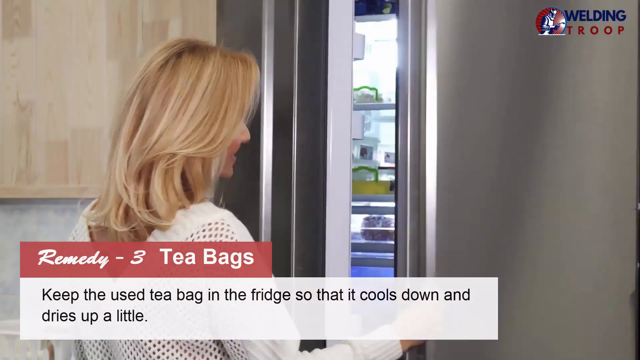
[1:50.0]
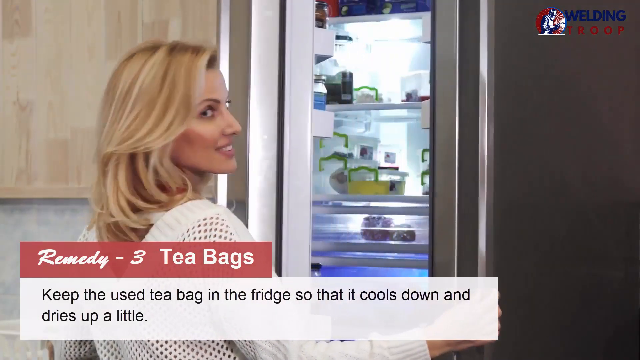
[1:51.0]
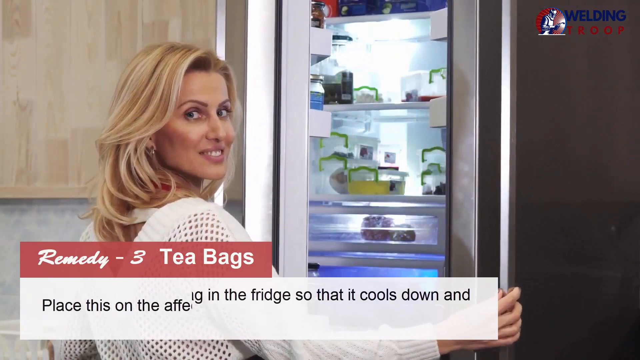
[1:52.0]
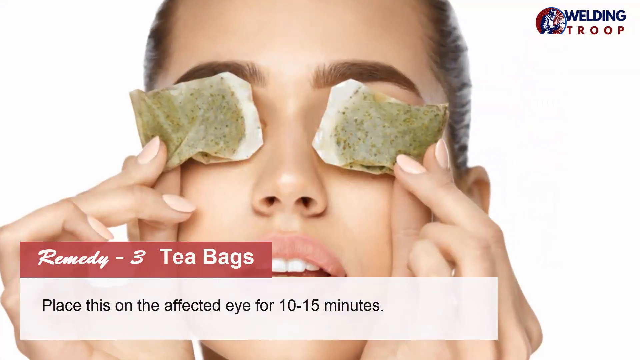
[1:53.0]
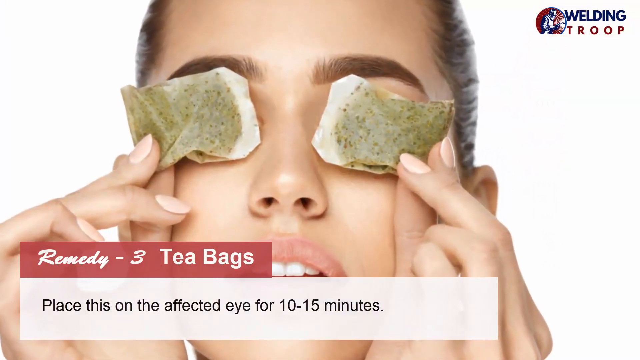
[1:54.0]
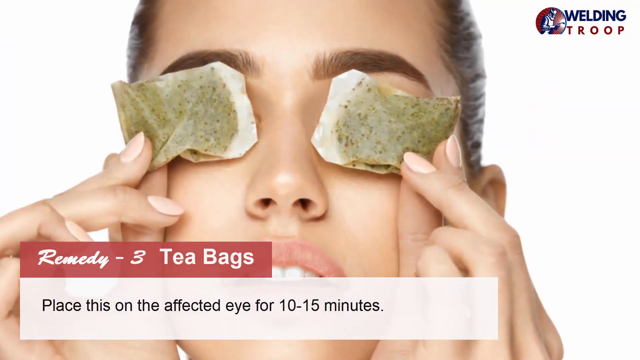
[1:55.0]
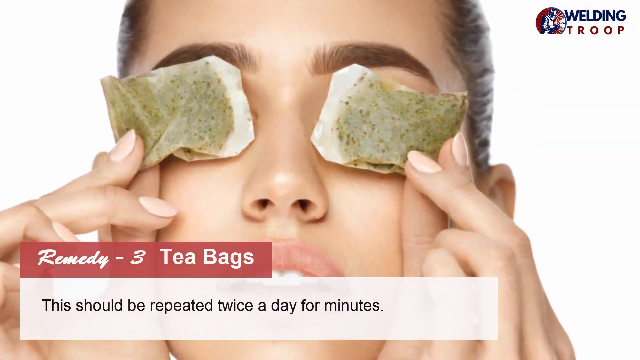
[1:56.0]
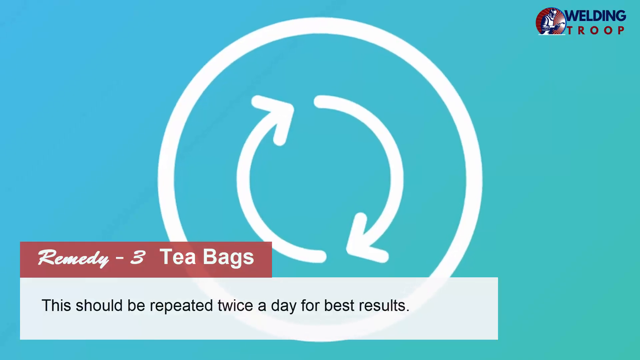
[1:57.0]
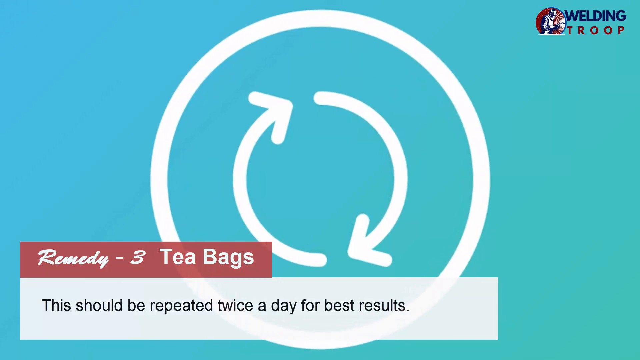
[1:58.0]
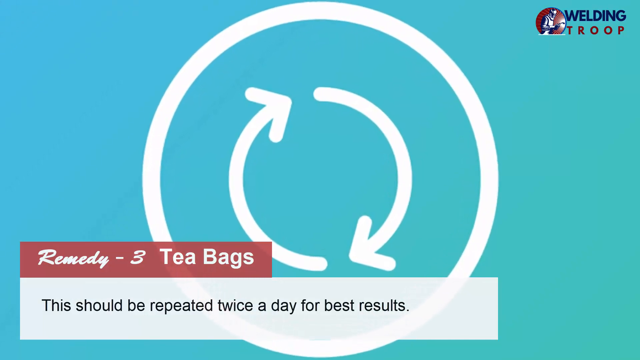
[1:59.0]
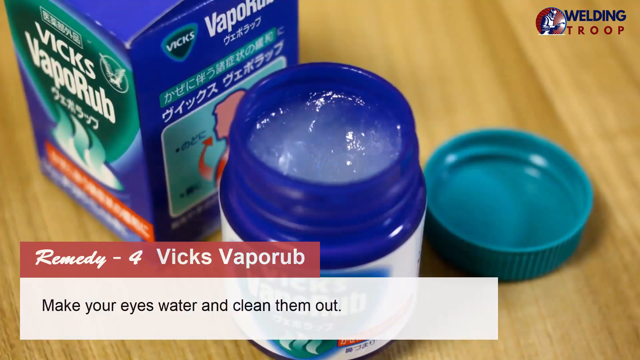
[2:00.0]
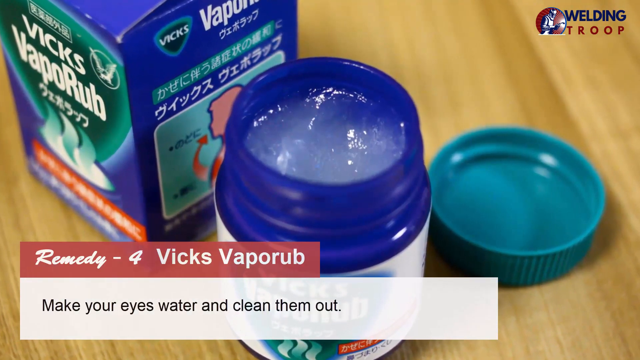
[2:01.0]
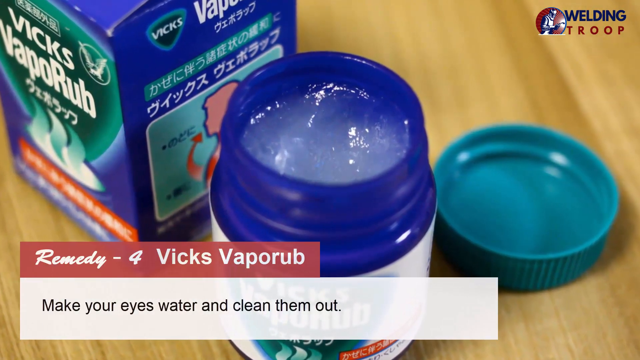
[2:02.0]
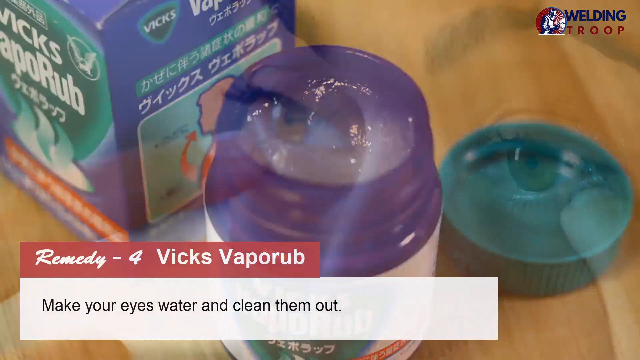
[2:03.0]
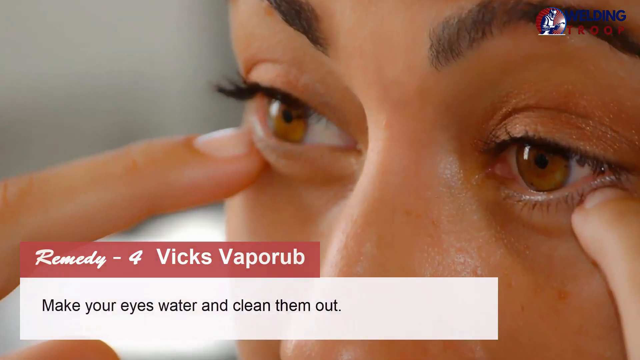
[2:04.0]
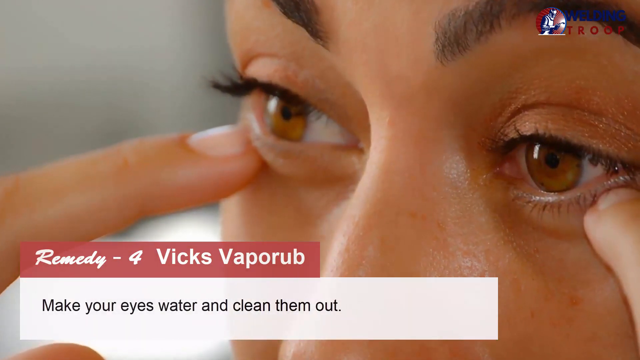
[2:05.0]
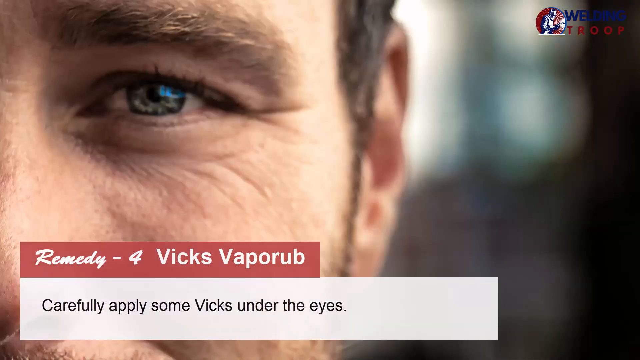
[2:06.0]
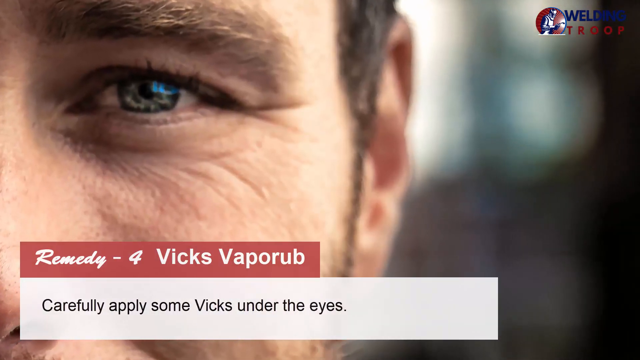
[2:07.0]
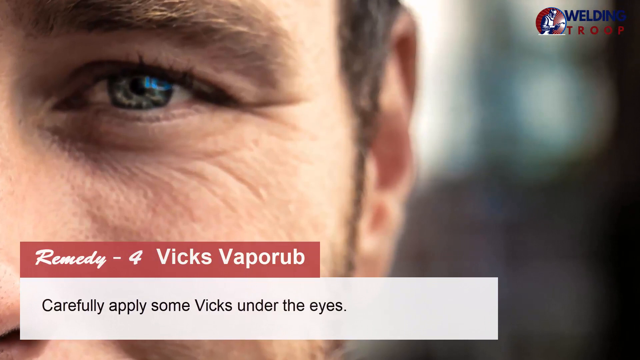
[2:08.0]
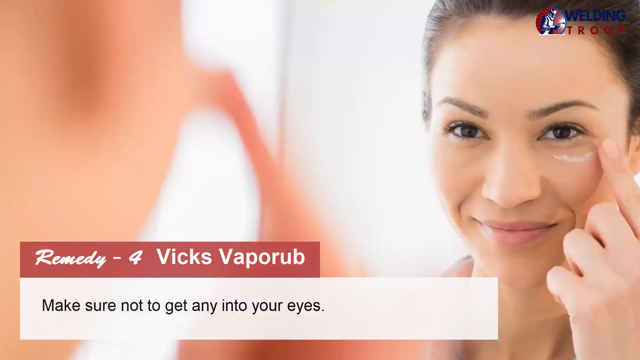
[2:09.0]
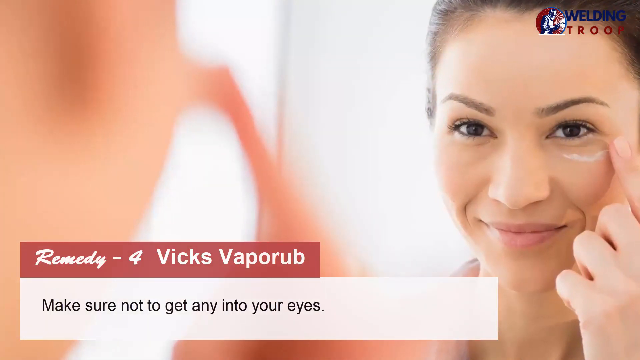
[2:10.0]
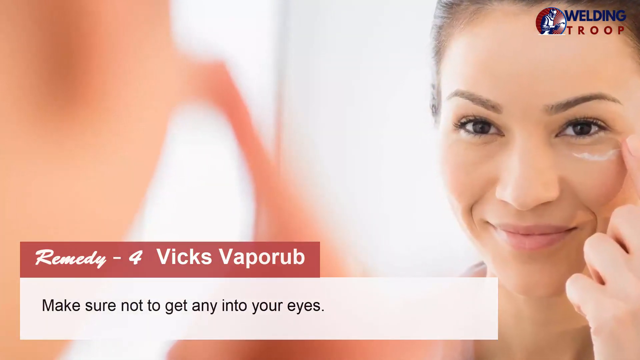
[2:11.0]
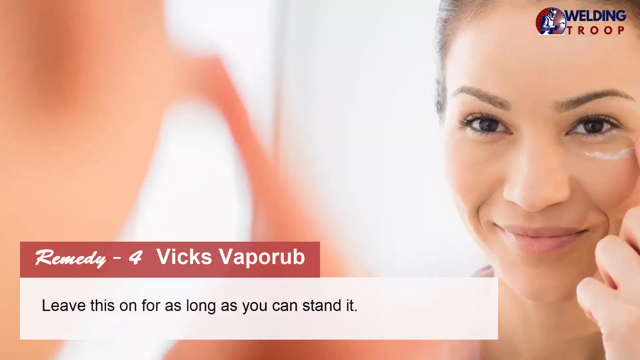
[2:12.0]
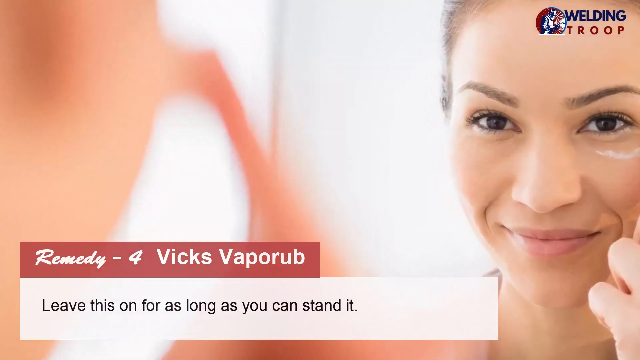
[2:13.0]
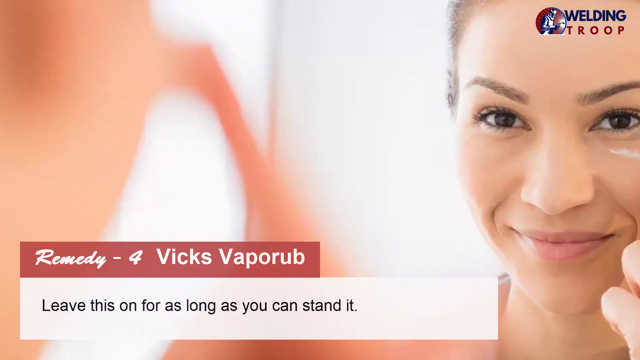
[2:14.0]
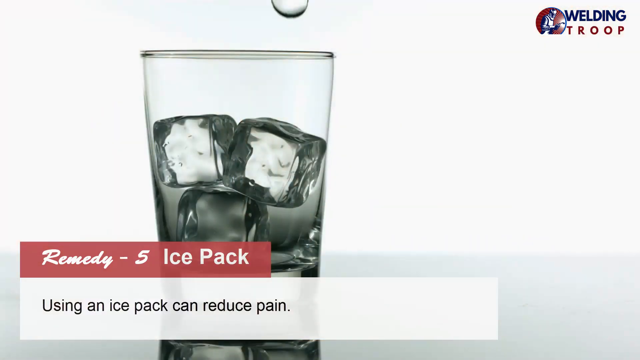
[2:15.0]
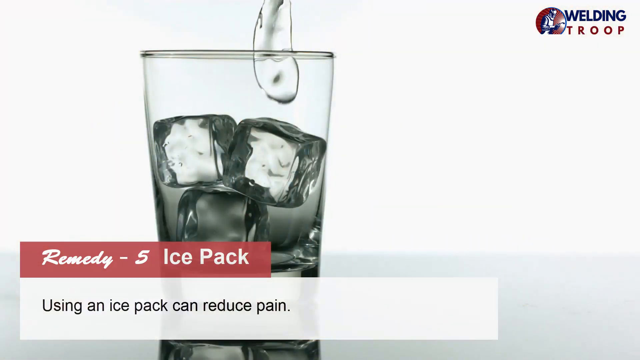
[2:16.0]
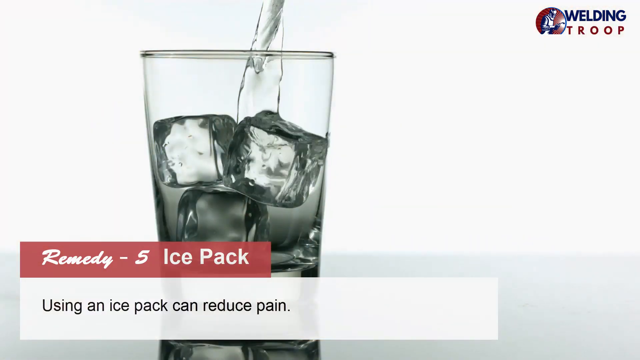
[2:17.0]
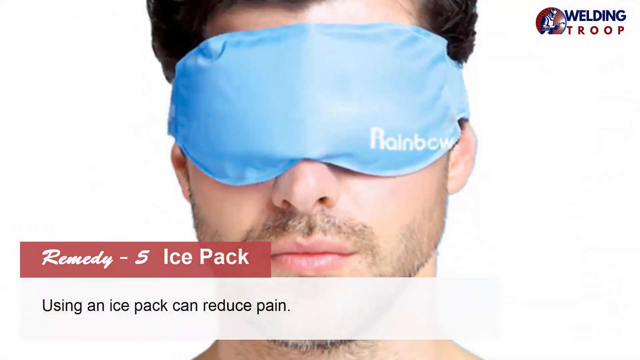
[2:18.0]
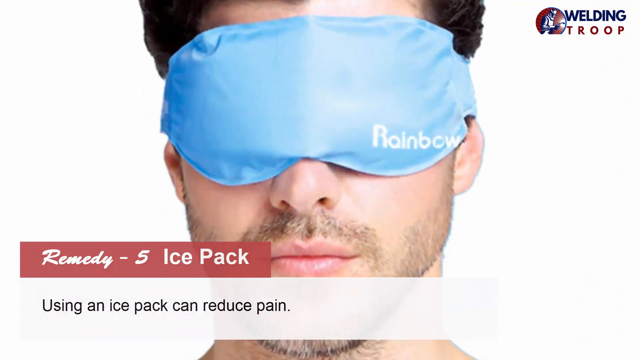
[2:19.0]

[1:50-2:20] A woman opens a refrigerator, with the text "keep the used bag in the fridge so that it cools down and dries up a little." Another woman has two tea bags over her eyelids as text instructs placing this on the affected eye for 10 to 15 minutes. A repeat button, two lines with arrows forming a circle, appears with the text "this should be repeated twice a day for the best results." Next comes Vicks VapoRub: the box is visible, along with the opened can of VapoRub and the lid beside it. Text reads "remedy four Vicks VapoRub" and "Make your eyes water and clean them out." A woman points at her eyes with her pointer fingers, with text beginning "make your eyes." A man's eye is shown, then a woman rubs something like a cream under one of her eyes, with text about making sure not to get any into the eyes and leaving it on for as long as you can stand it. A glass with ice cubes appears with the text "remedy five ice pack" and "using an ice pack can reduce pain."